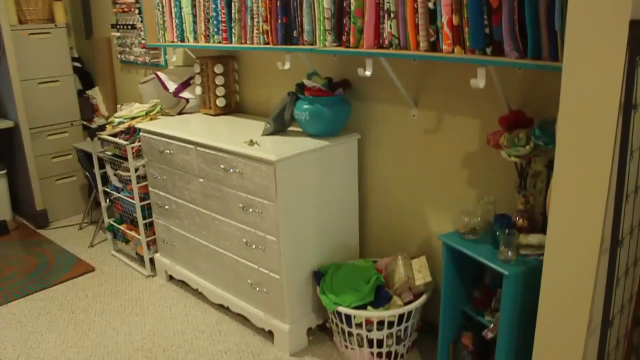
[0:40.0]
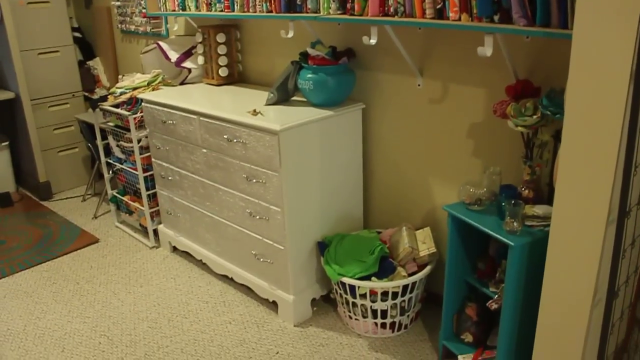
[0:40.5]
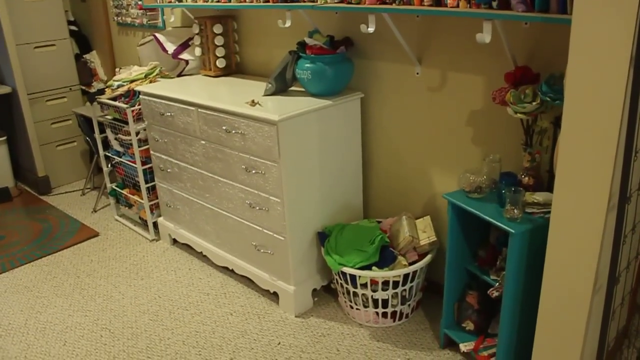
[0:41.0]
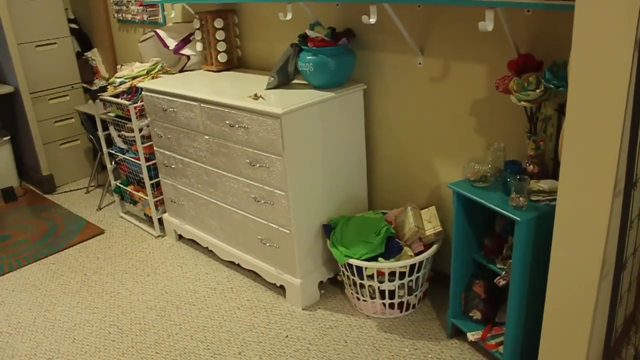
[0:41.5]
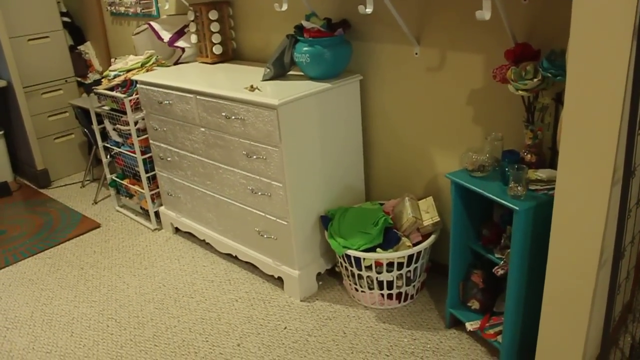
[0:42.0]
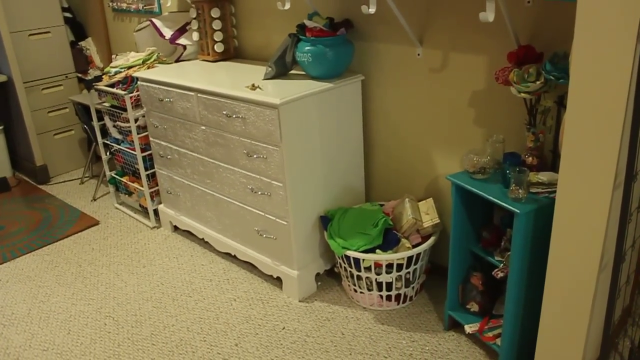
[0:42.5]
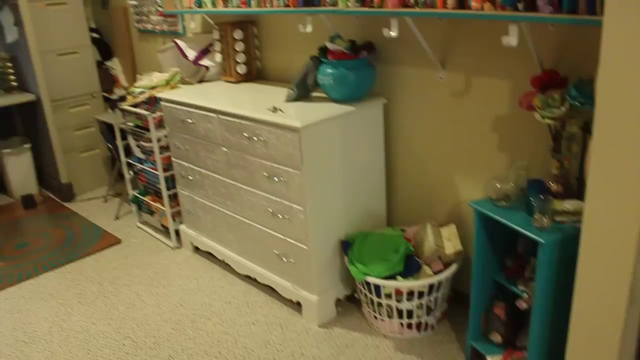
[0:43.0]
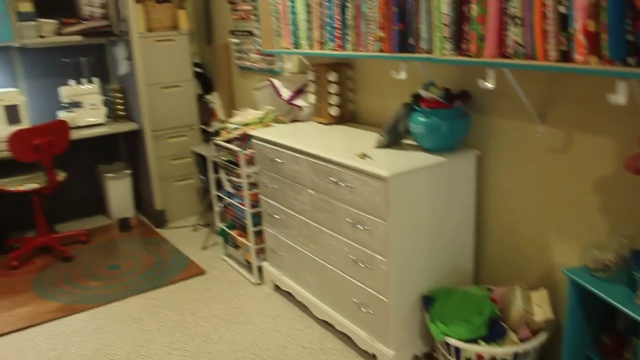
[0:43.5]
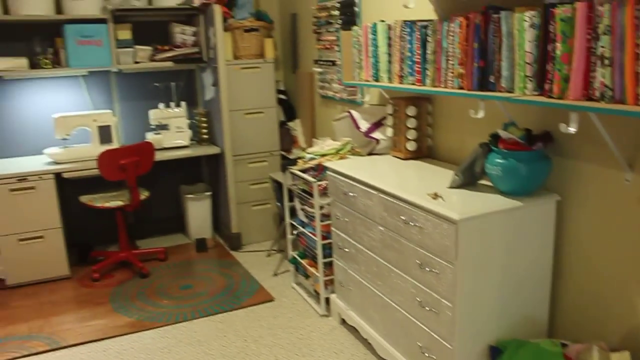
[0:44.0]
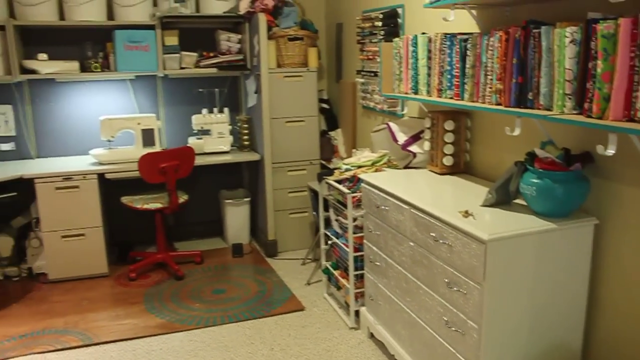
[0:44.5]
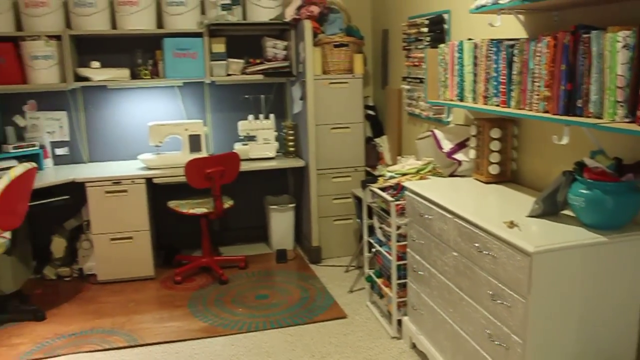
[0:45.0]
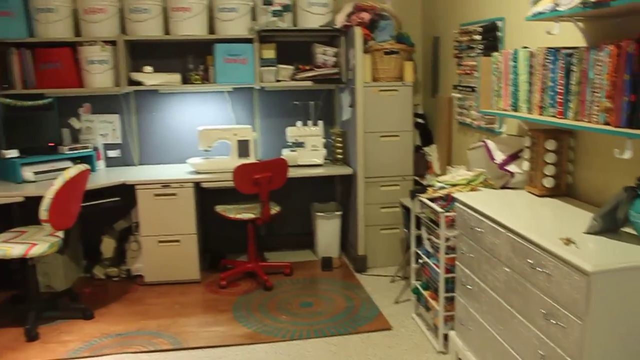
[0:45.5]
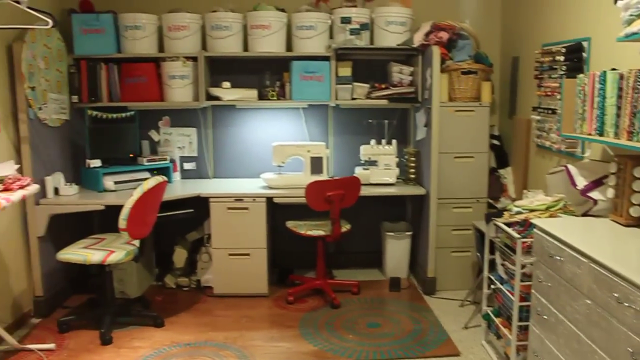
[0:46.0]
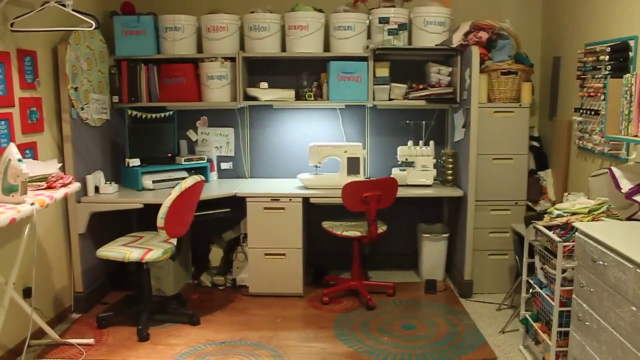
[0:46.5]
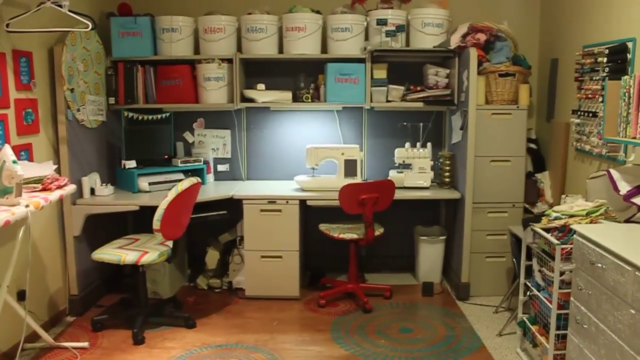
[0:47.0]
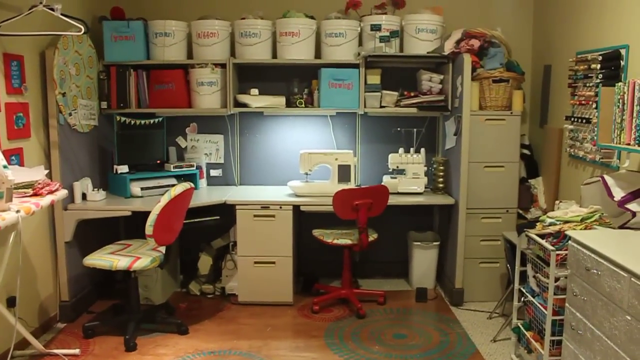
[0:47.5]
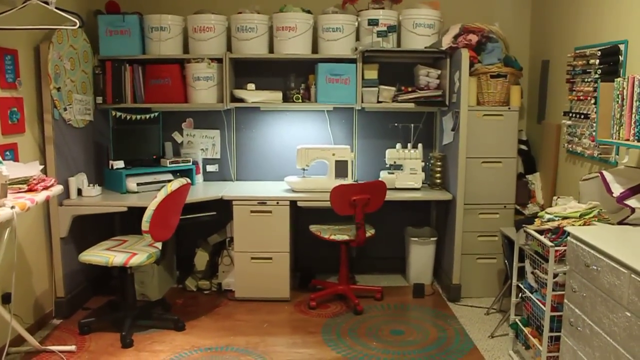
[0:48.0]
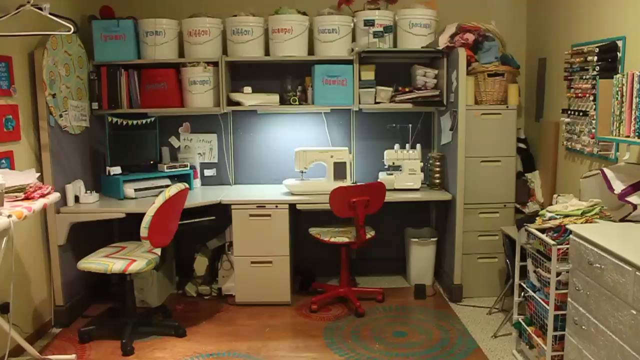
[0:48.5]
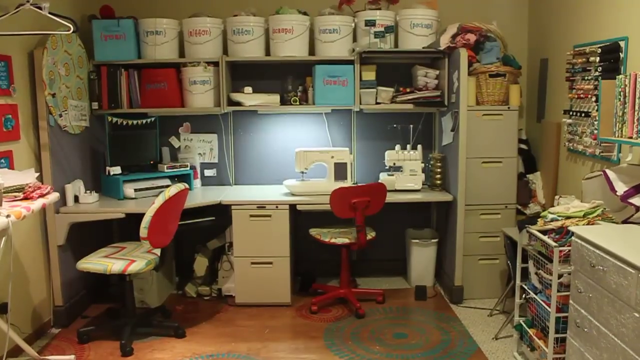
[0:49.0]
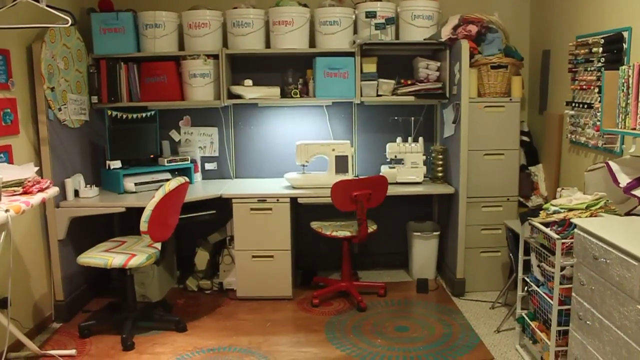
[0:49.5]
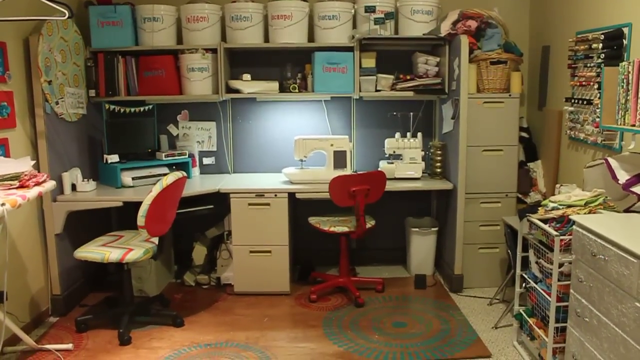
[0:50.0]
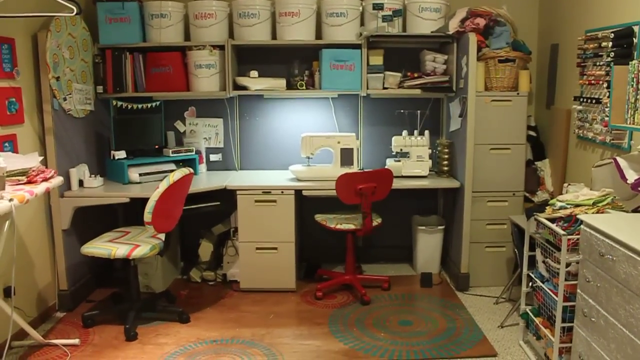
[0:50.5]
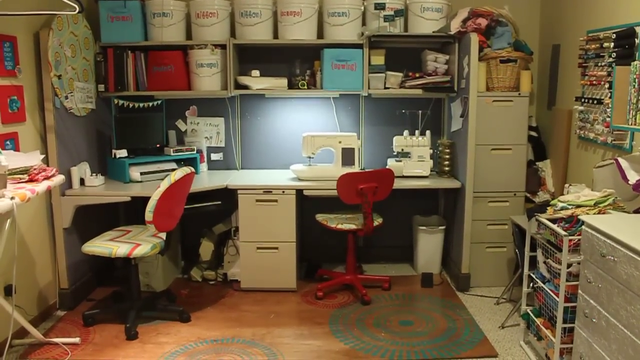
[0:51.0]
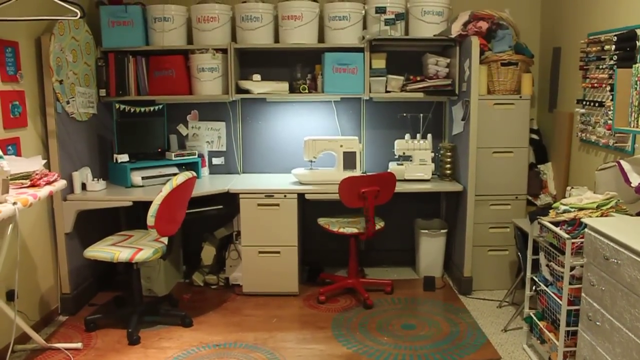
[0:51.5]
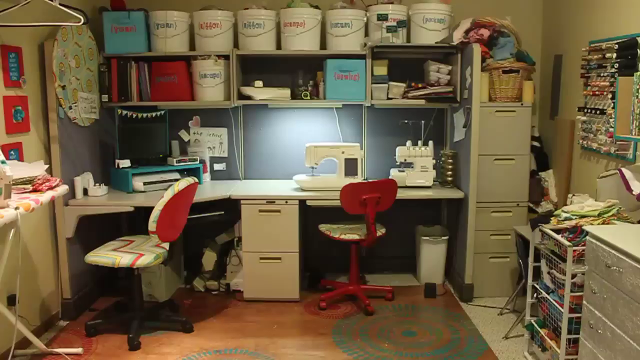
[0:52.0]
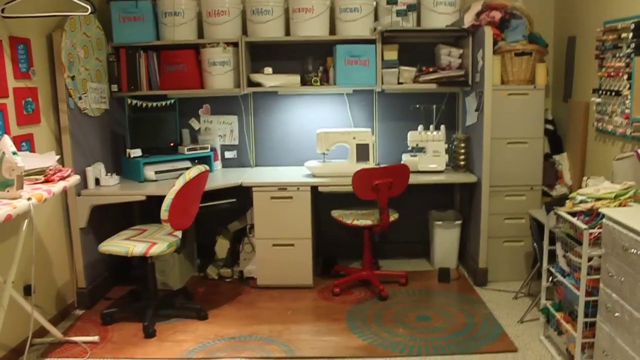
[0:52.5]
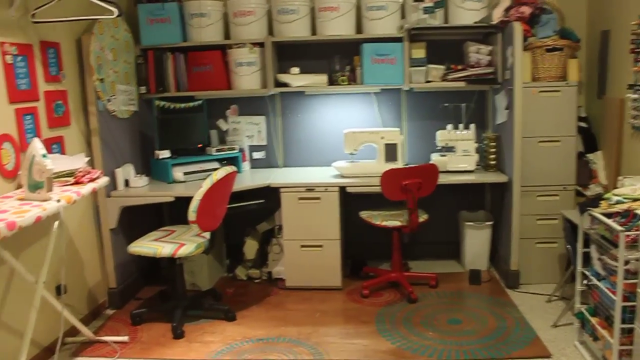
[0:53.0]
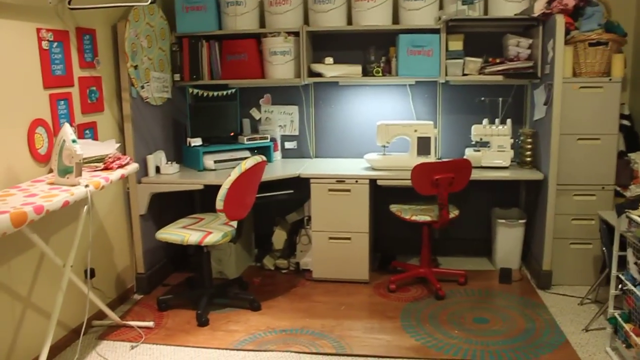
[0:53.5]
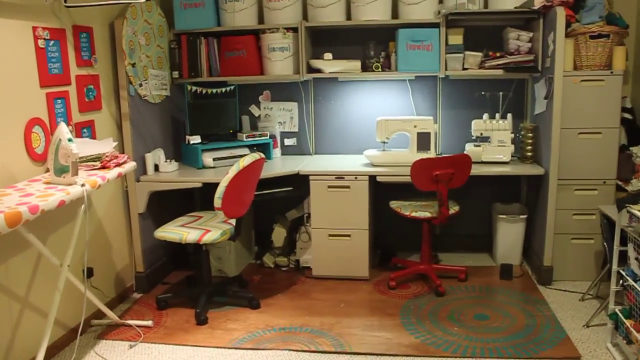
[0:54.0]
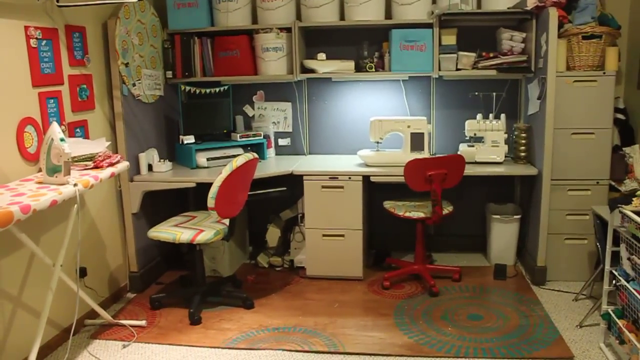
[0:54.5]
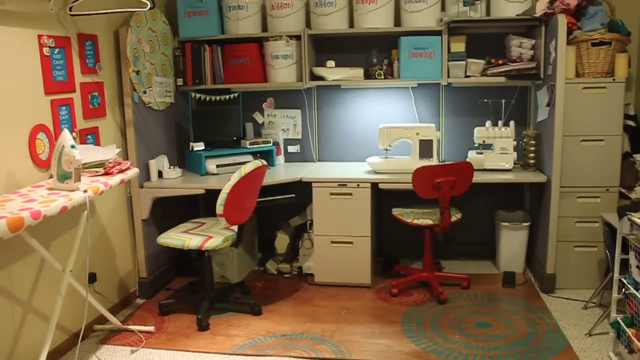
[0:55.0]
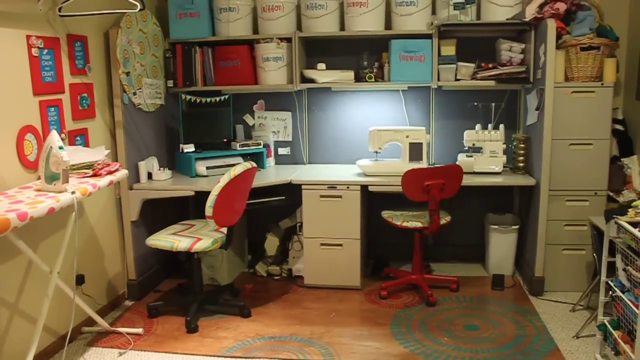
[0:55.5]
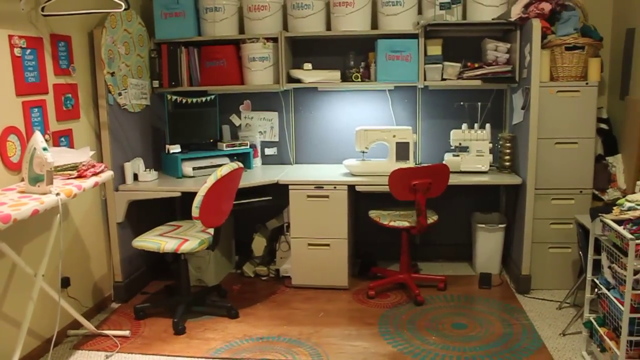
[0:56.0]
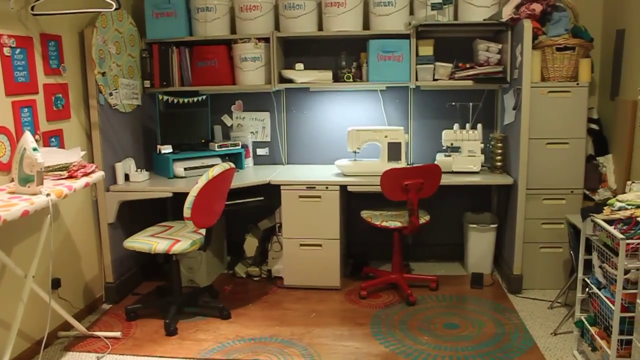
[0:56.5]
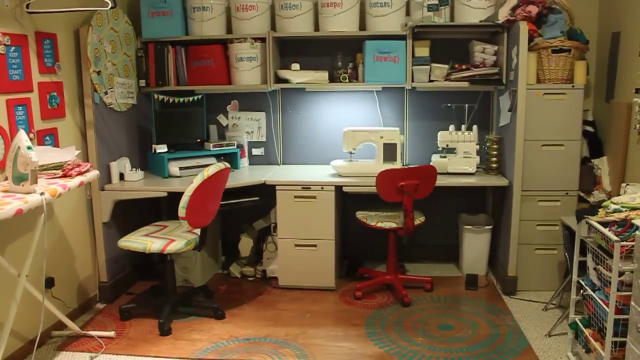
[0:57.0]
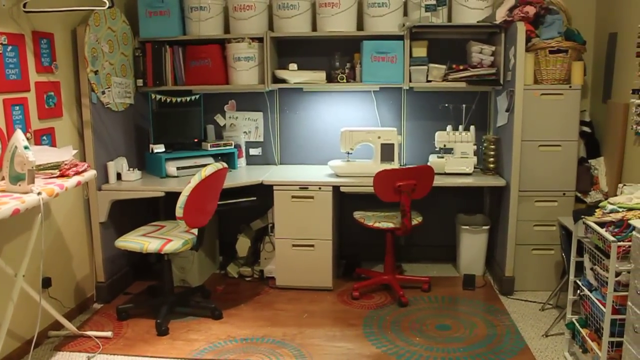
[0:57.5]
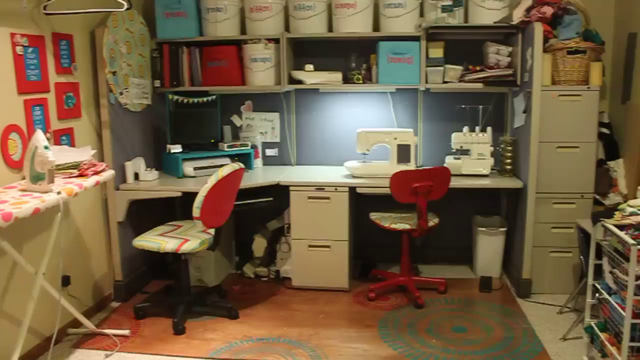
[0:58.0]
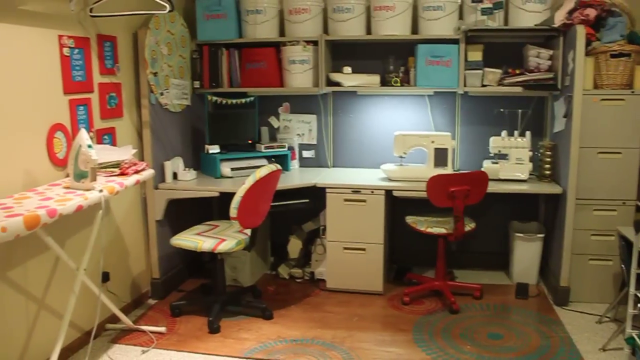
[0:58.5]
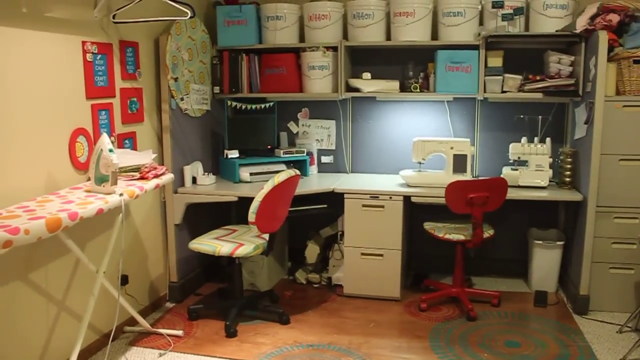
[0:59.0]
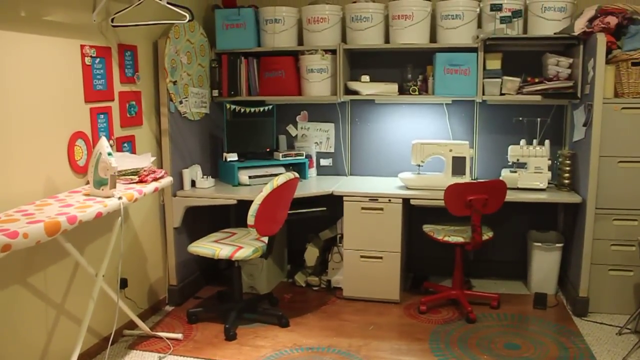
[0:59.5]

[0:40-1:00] The shot shows the right side of the room, which has yellowish walls, a shelf, and a dresser below the shelf. To the right of the dresser is a clothing basket holding various fabrics used for crafting. To the right of that basket is a small blue display shelf with some fake roses made with crafts on top. On top of the white dresser there is a blue pot and a spice rack. The shelves hanging on the wall hold various fabrics. The camera then pans back to the left to show the white desk at the back of the room, which has a lot of shelves at the top. The topmost shelf has a bunch of buckets that appear to be filled with crafting material.